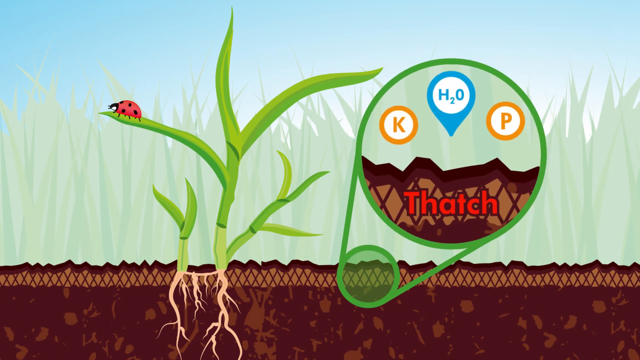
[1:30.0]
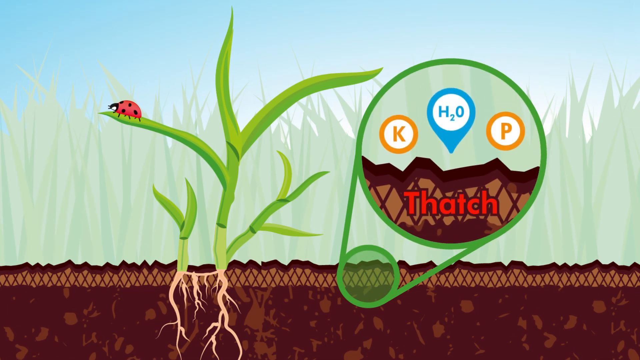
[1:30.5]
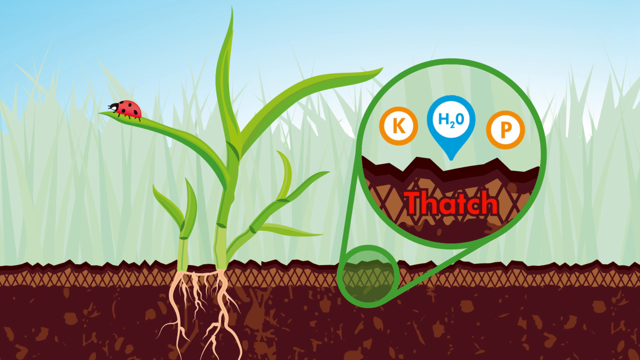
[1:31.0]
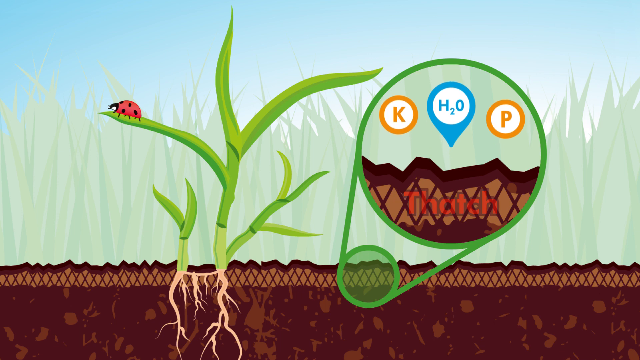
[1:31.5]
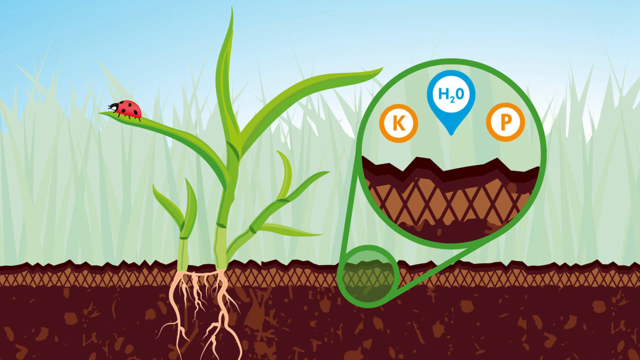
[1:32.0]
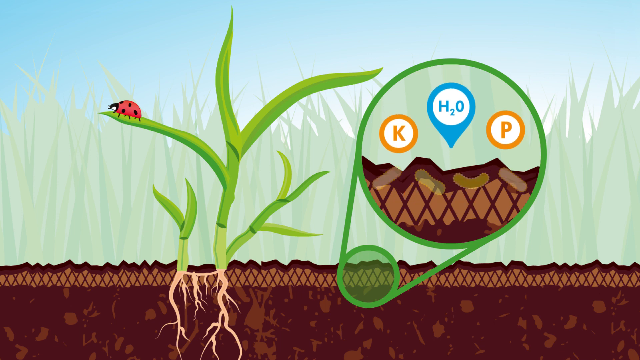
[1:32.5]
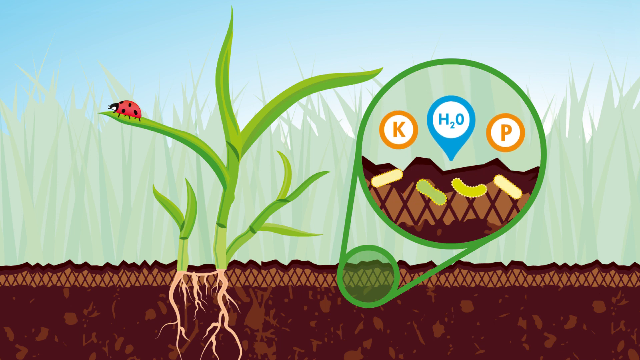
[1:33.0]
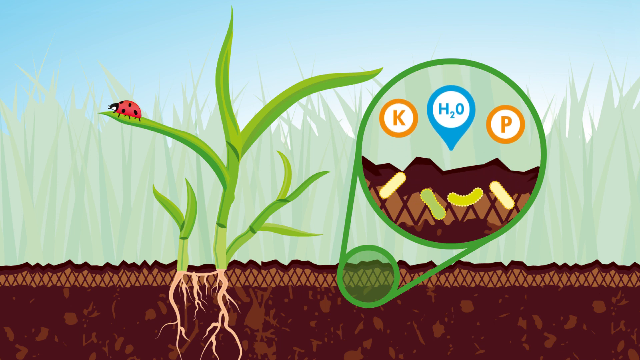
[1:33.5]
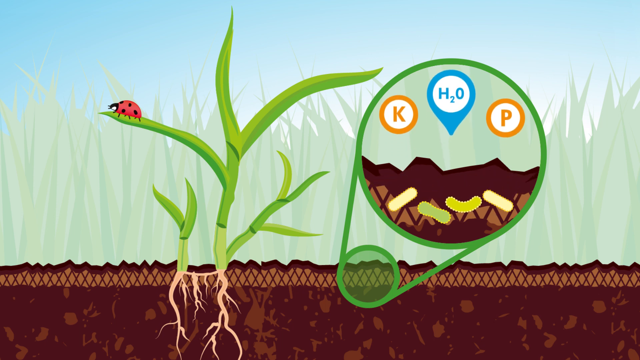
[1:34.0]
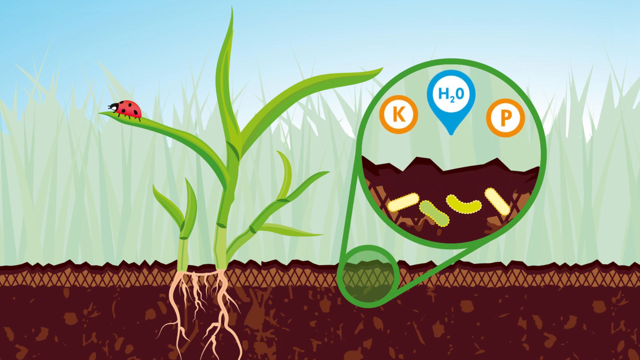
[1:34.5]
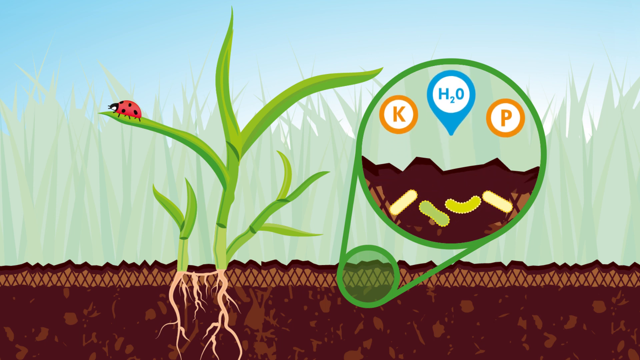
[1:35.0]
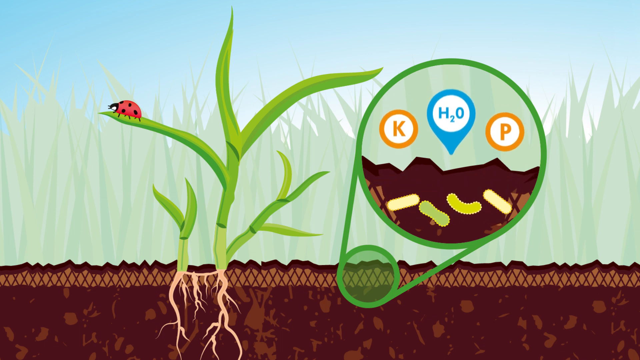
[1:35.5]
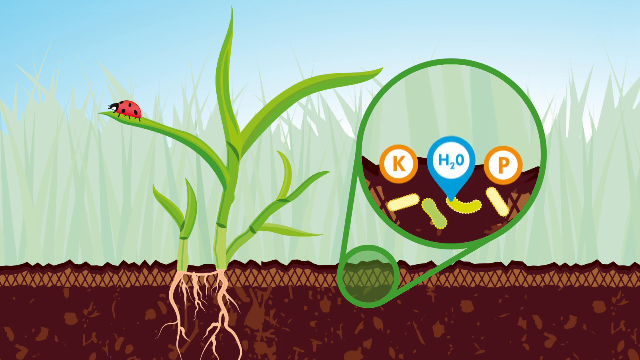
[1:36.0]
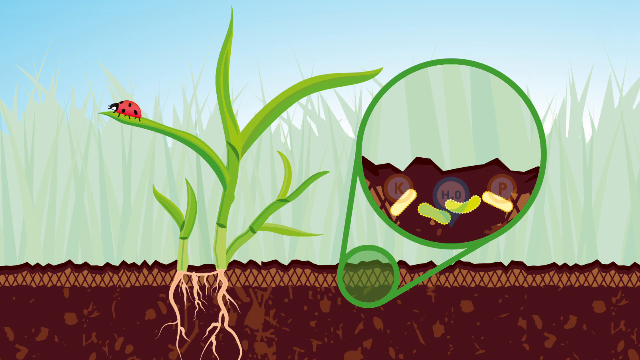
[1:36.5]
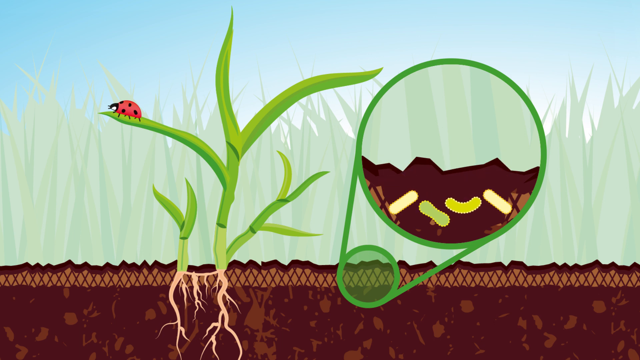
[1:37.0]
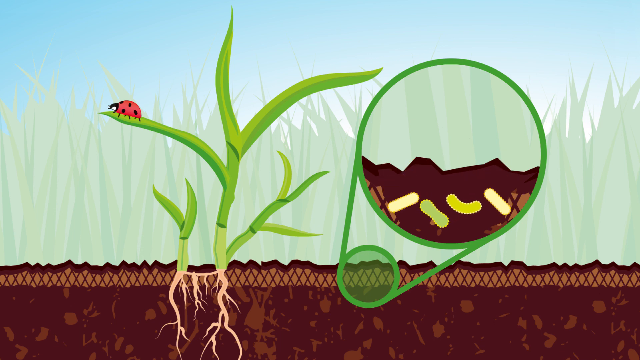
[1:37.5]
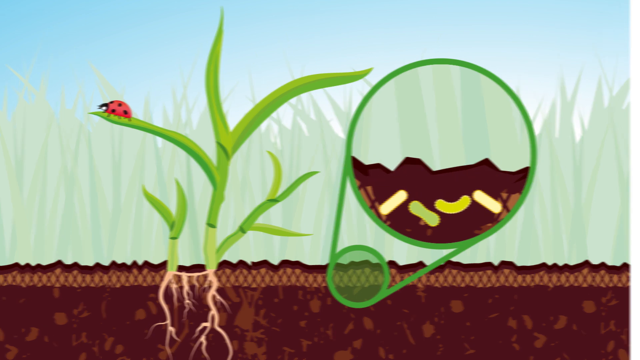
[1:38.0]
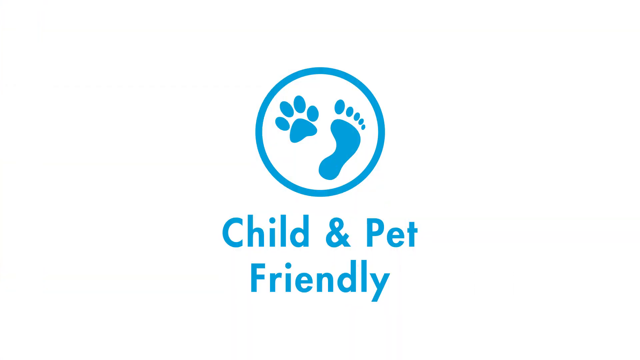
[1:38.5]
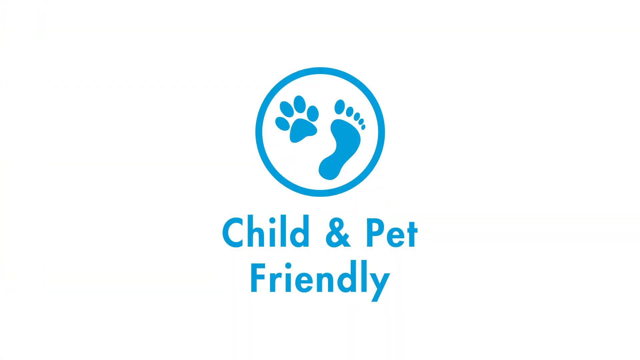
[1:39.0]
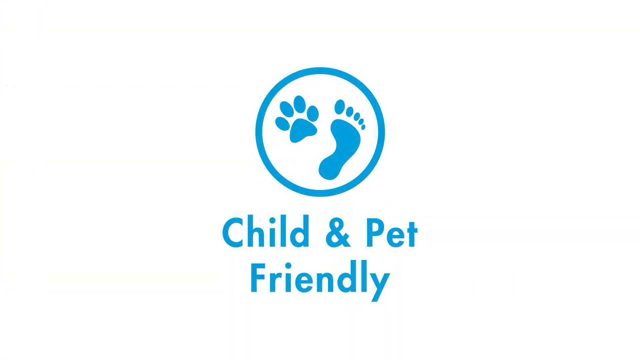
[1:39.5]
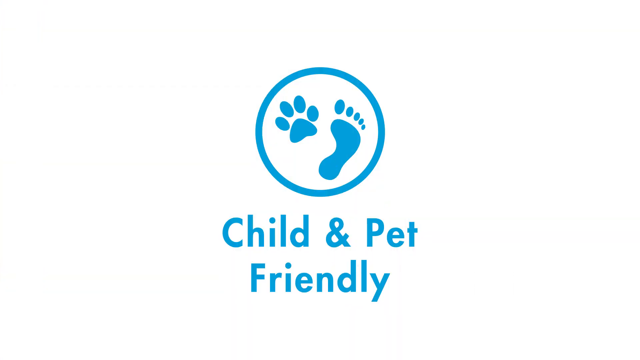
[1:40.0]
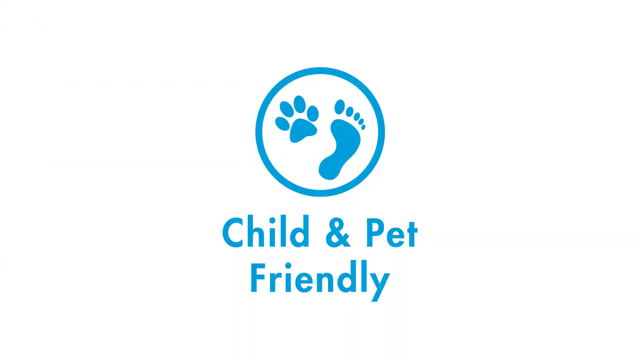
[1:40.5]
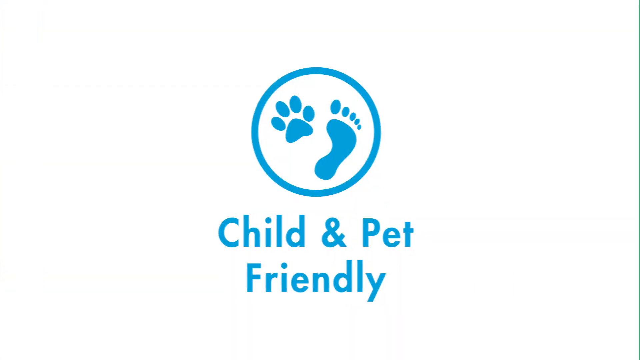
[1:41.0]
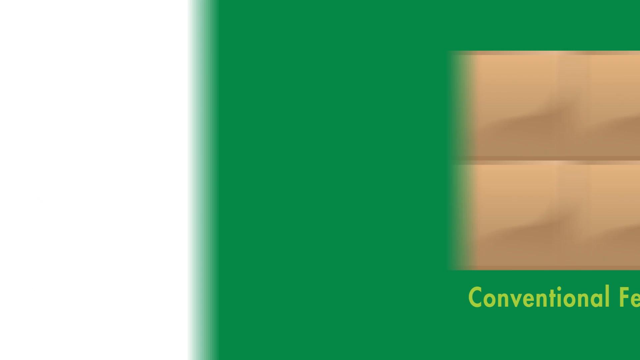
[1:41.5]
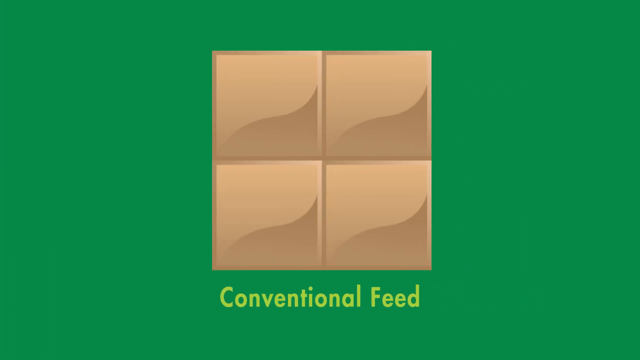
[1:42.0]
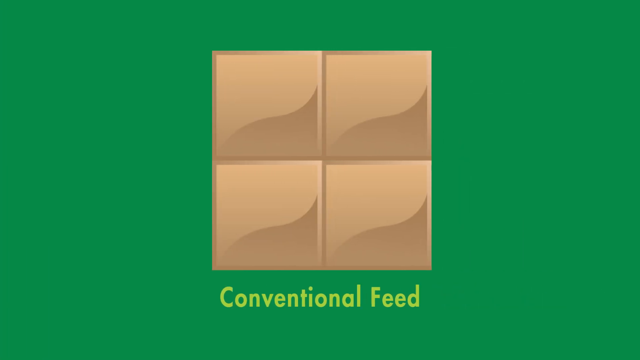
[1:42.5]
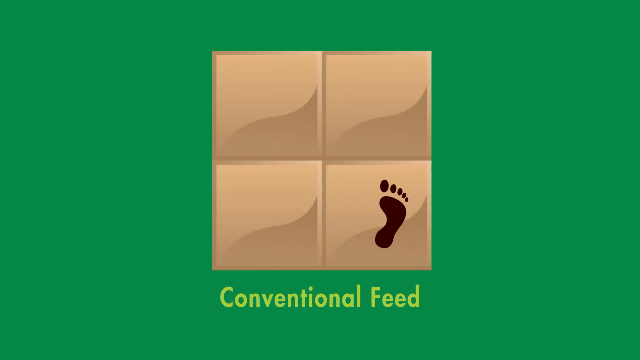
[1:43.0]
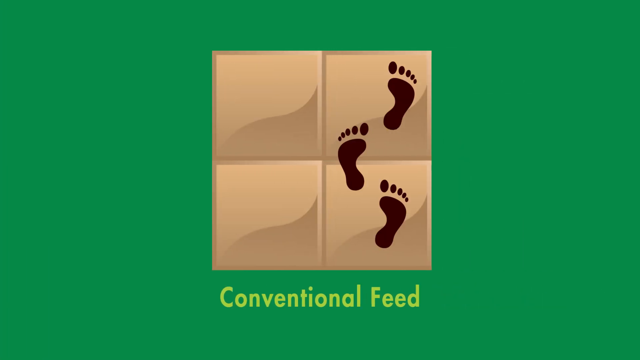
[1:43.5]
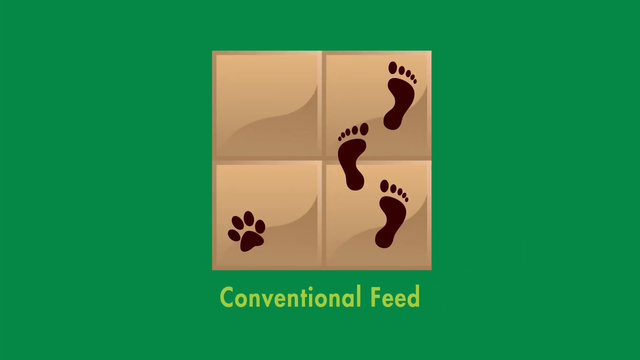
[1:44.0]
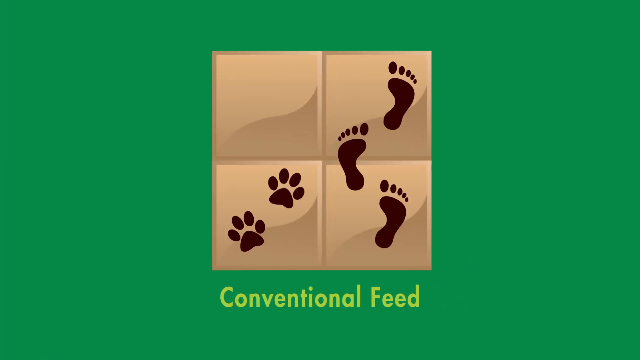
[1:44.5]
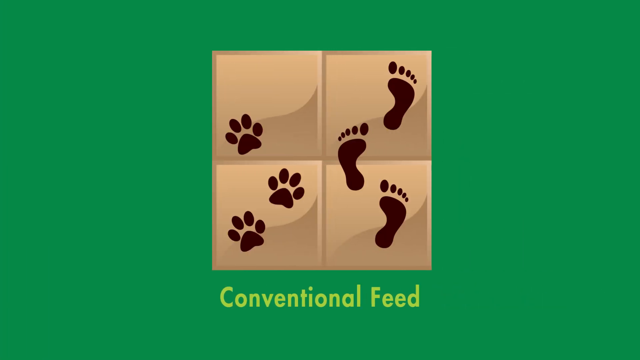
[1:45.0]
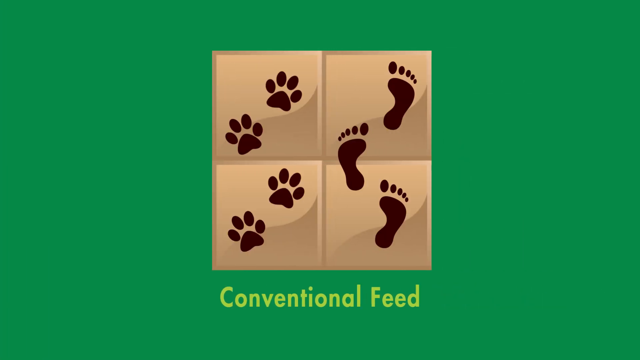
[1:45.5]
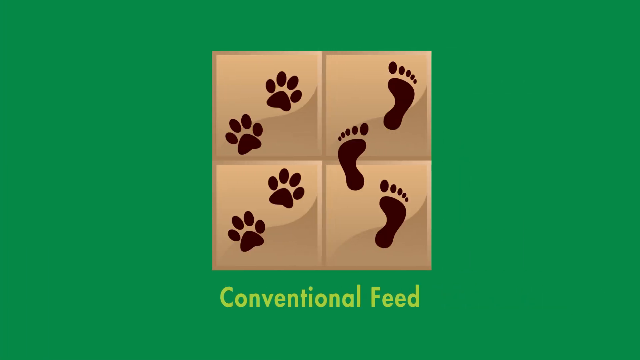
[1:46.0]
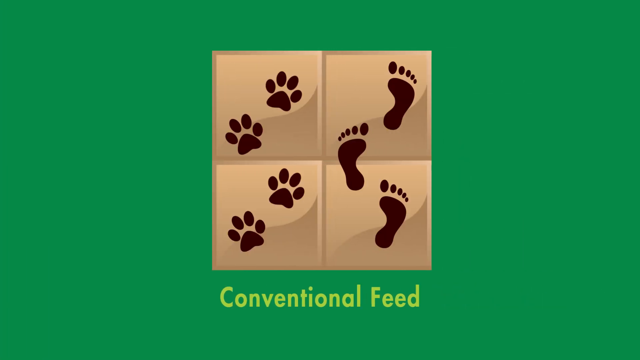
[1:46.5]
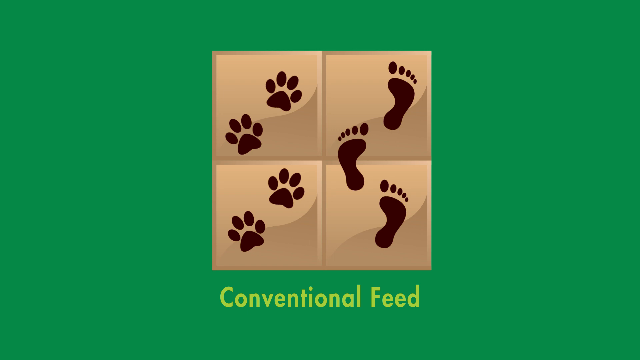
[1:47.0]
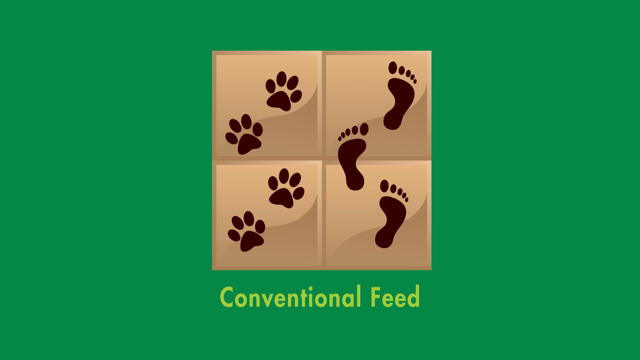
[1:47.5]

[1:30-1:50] The words "child and pet friendly" appear.